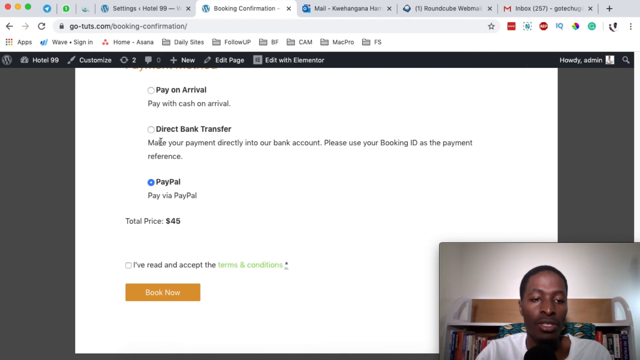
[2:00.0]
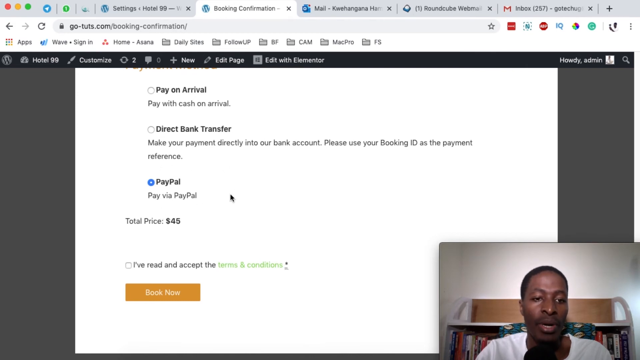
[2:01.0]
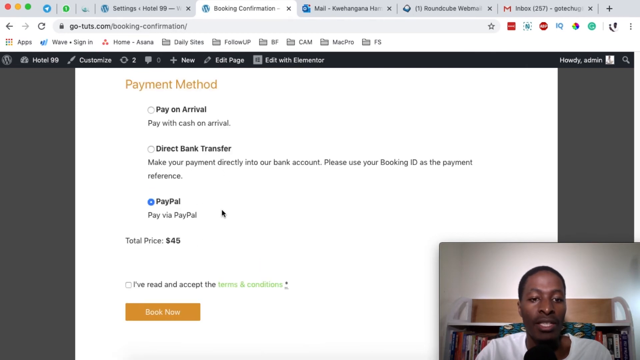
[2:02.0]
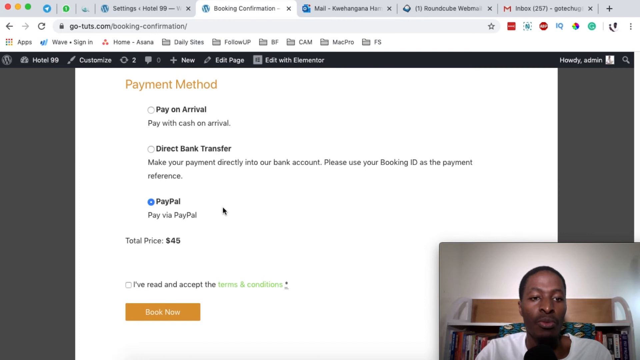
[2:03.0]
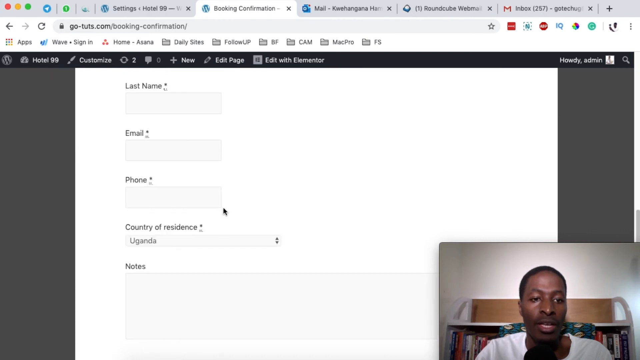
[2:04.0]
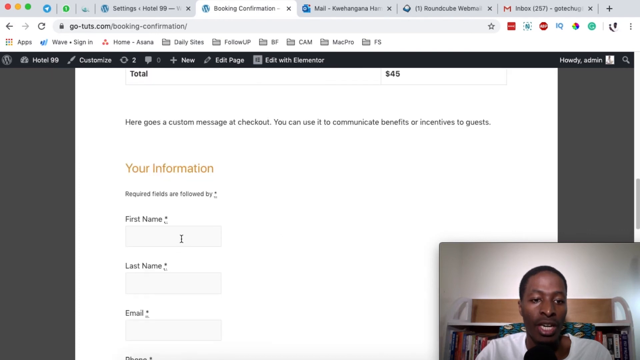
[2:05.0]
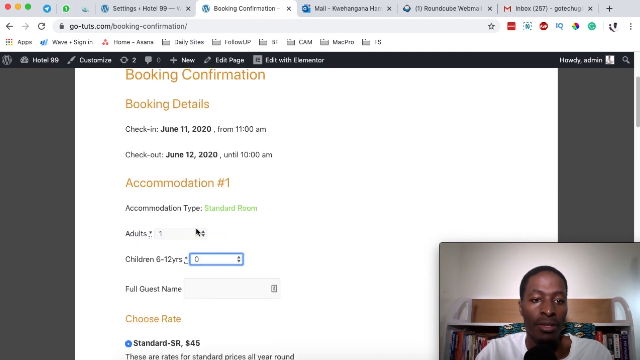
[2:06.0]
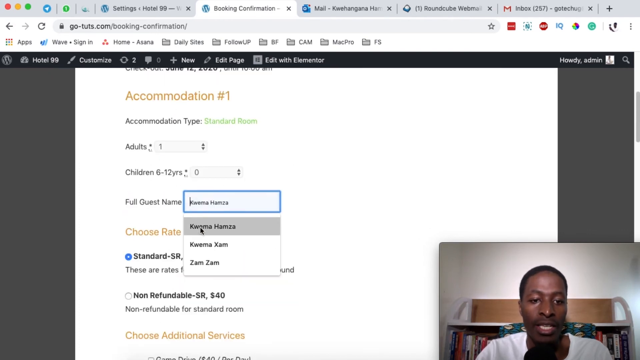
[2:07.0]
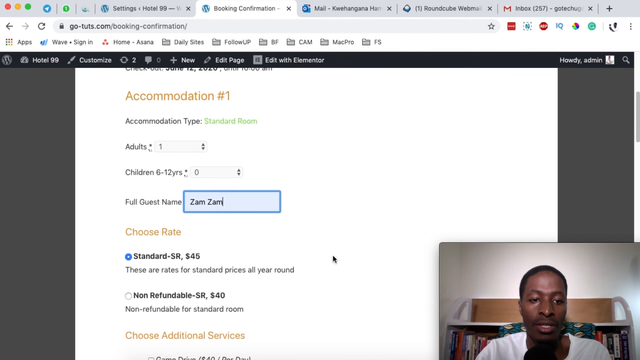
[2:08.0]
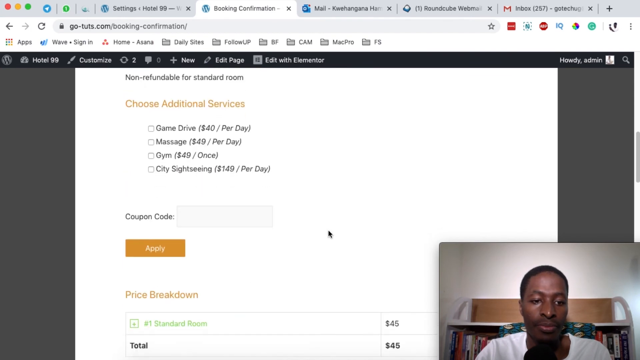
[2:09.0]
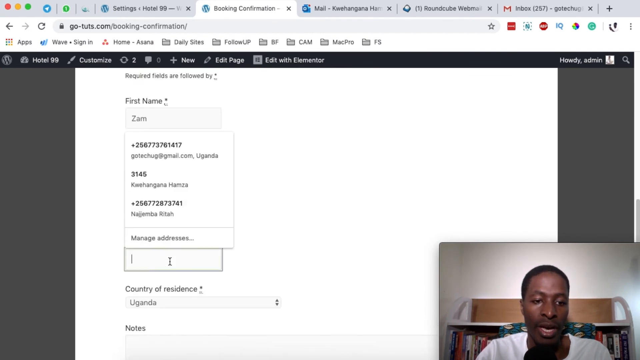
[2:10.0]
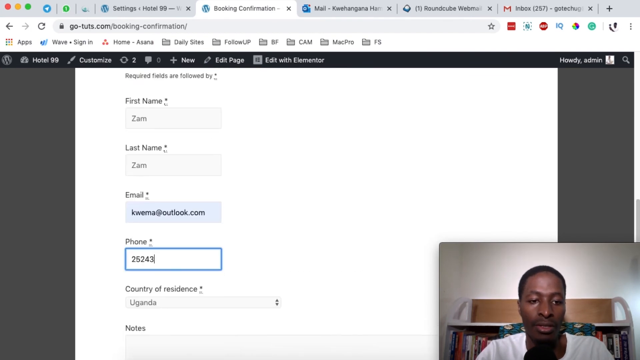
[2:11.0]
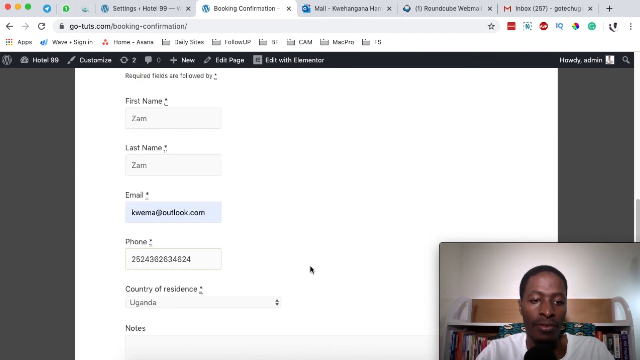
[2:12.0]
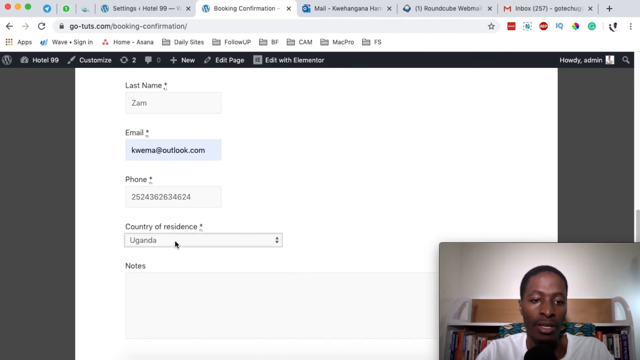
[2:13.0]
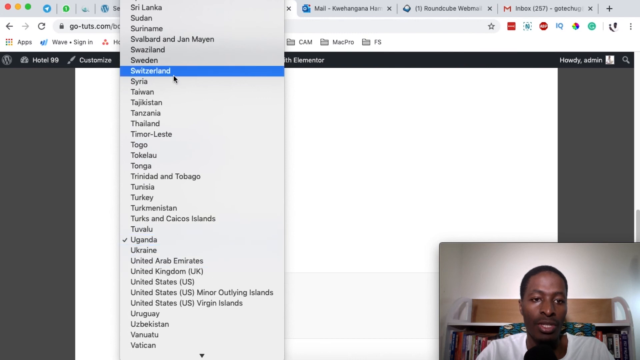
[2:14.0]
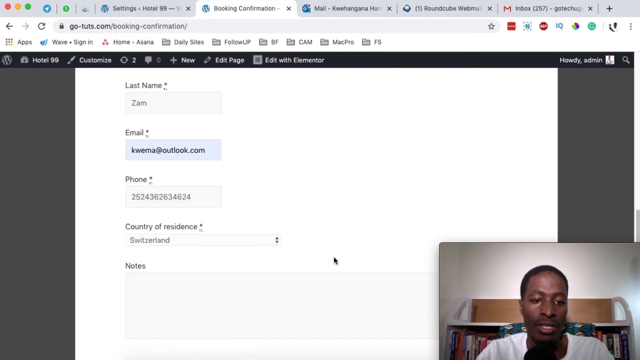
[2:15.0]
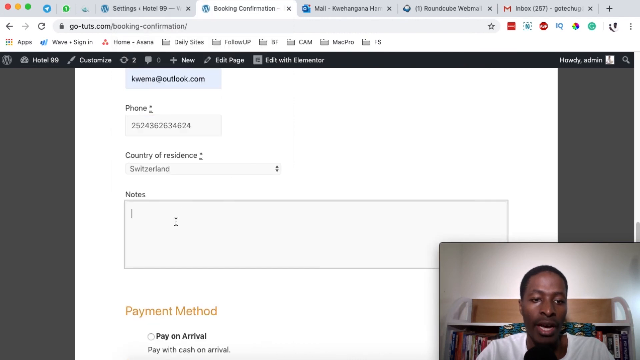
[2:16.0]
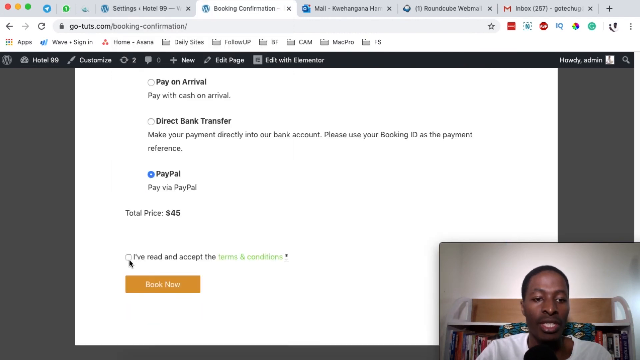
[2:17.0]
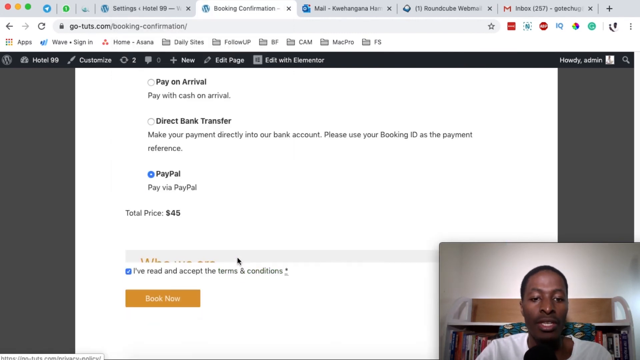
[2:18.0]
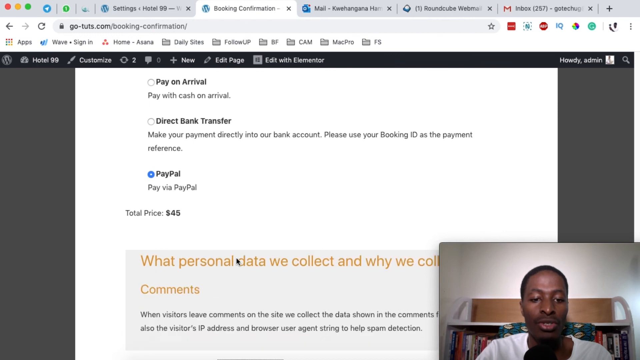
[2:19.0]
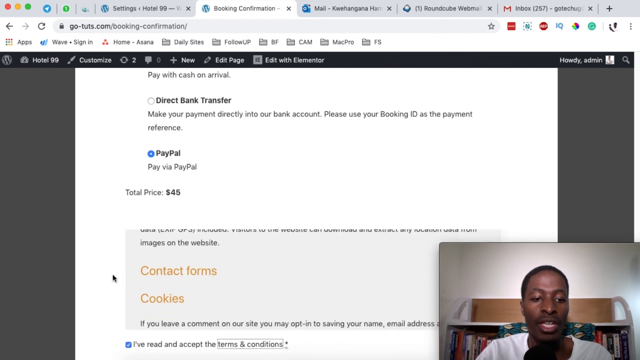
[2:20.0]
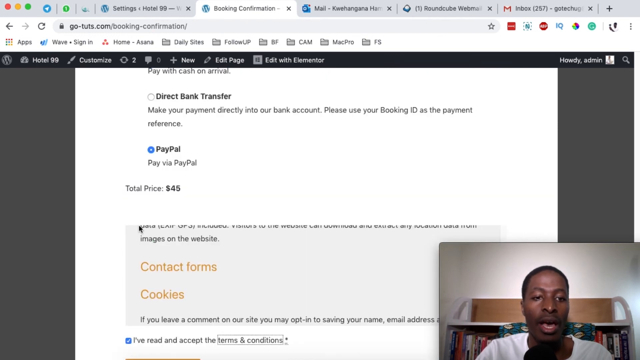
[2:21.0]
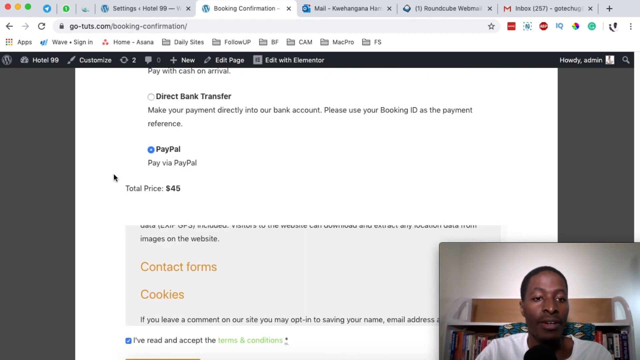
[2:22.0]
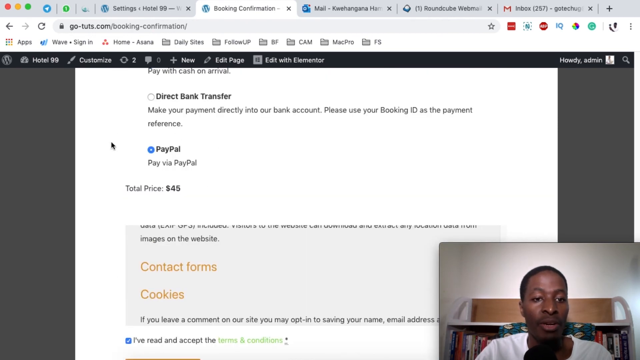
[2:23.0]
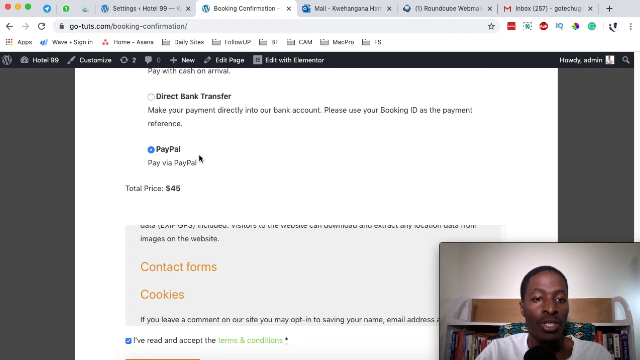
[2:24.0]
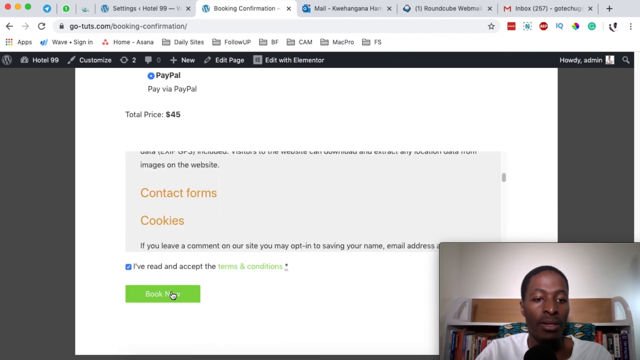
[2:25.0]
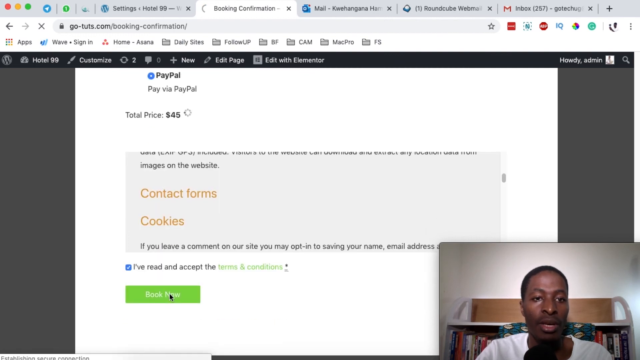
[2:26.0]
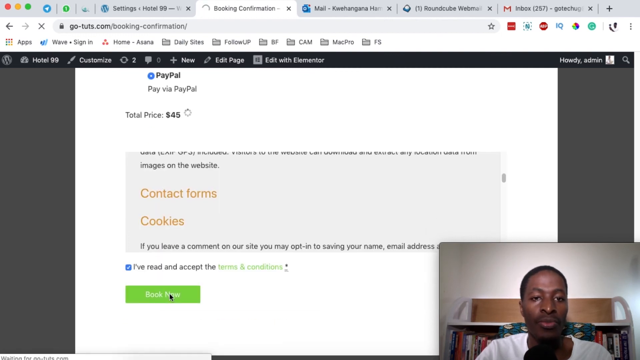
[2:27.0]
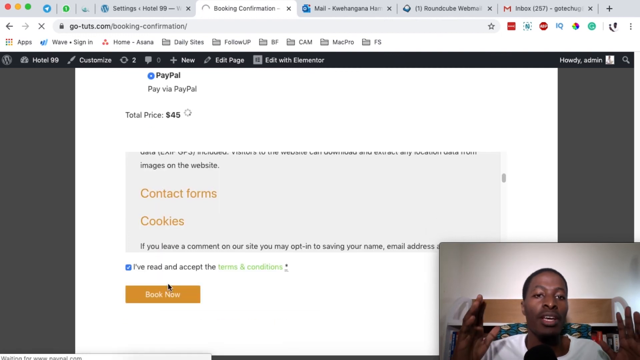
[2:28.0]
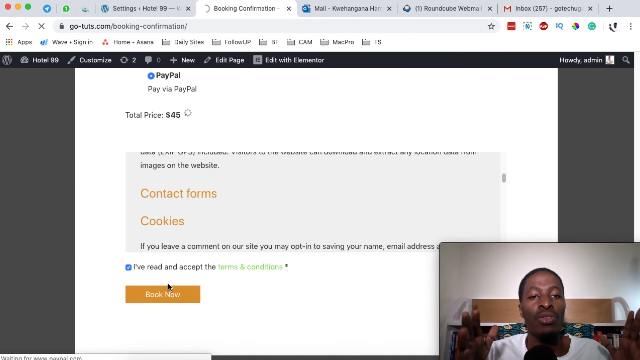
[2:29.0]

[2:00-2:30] A person's video appears in the lower right corner of the screen. On the website, a booking confirmation tab is at the top of the page, and to the left of that tab it says "settings, hotel 99," the WordPress settings for the site. The website address is go-tuts.com. The booking confirmation page shows the PayPal option selected, with "pay via paypal" underneath it. The mouse pointer moves around the screen as the person talks, scrolling up and down and filling in information for a room booking, with PayPal as the default payment method.